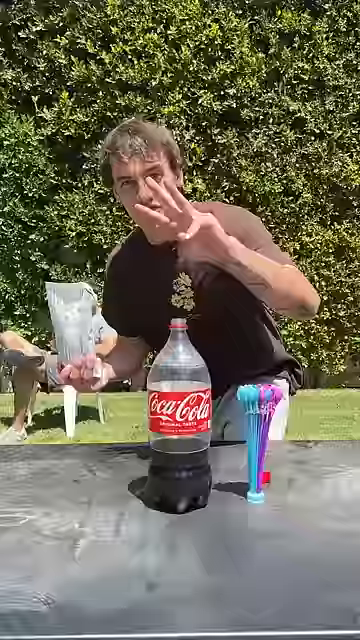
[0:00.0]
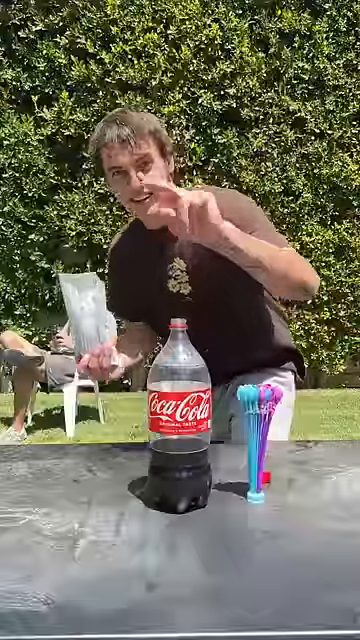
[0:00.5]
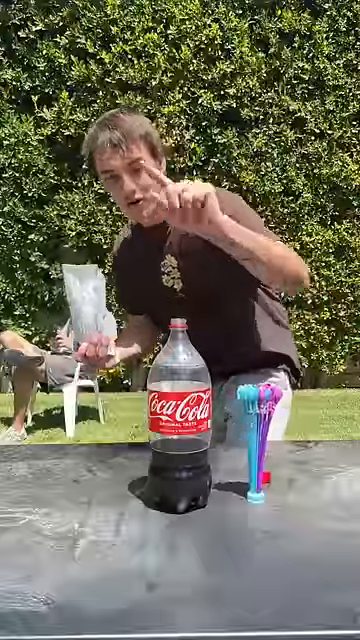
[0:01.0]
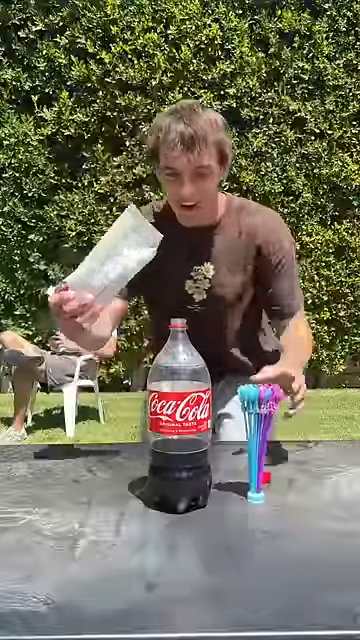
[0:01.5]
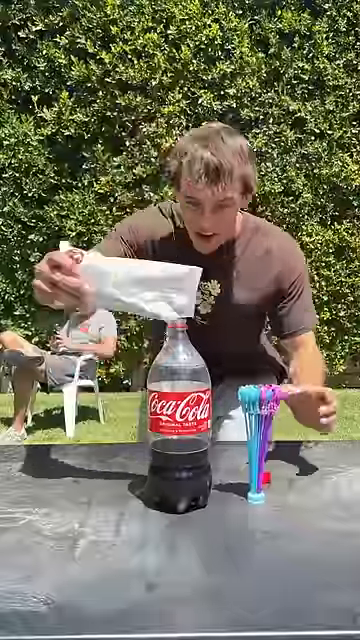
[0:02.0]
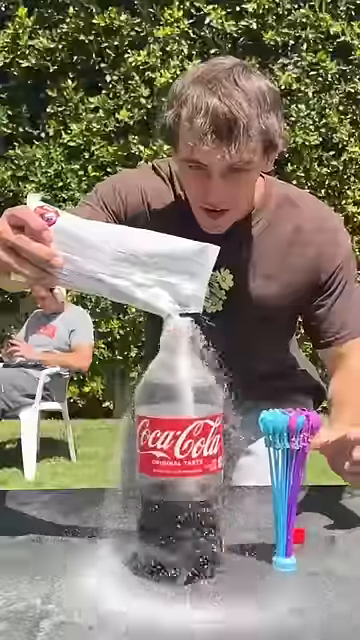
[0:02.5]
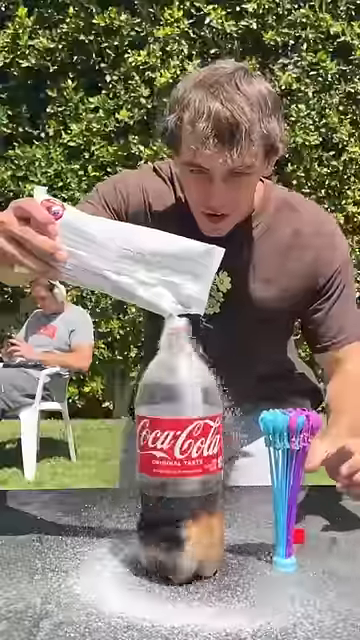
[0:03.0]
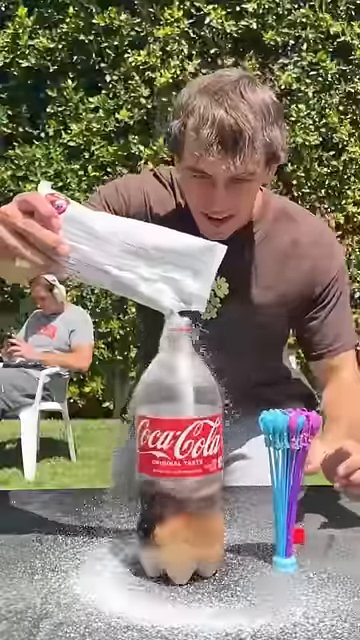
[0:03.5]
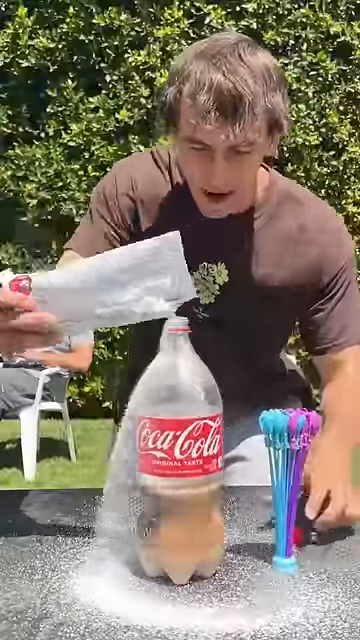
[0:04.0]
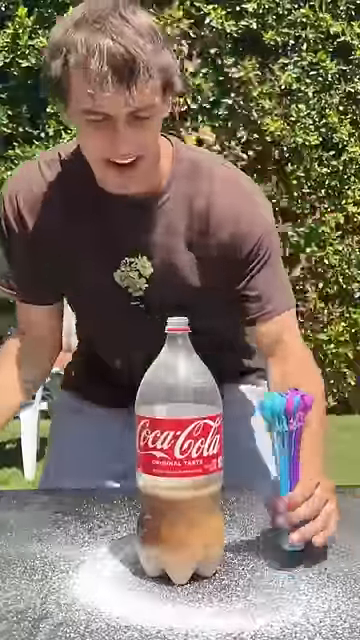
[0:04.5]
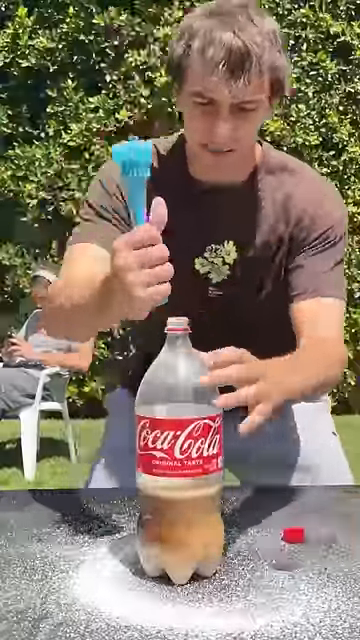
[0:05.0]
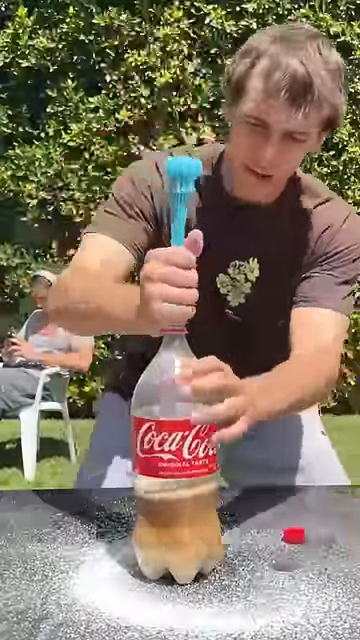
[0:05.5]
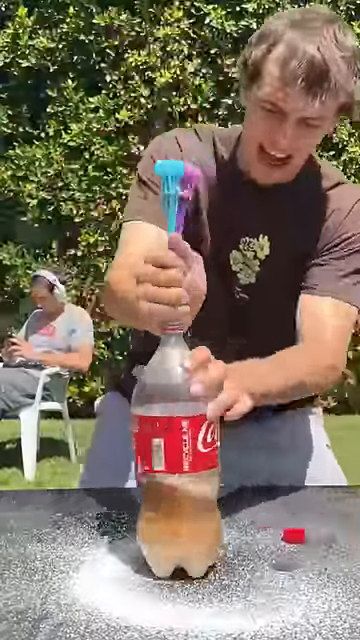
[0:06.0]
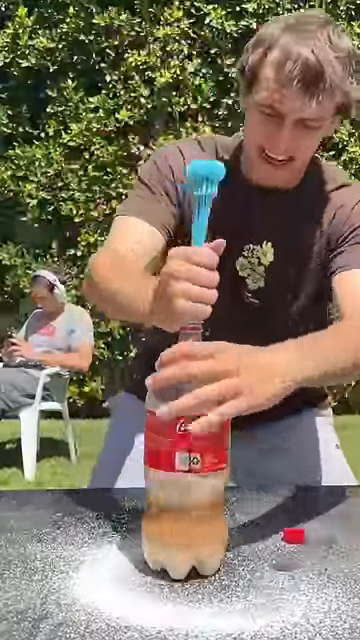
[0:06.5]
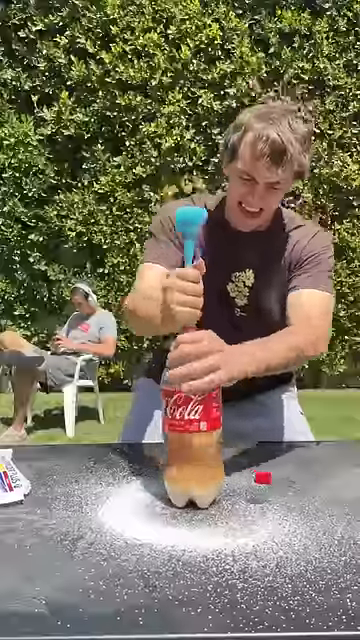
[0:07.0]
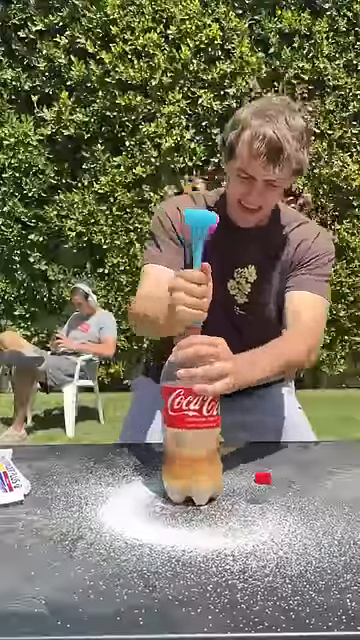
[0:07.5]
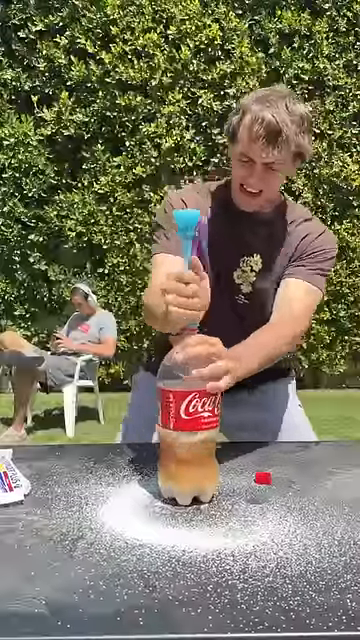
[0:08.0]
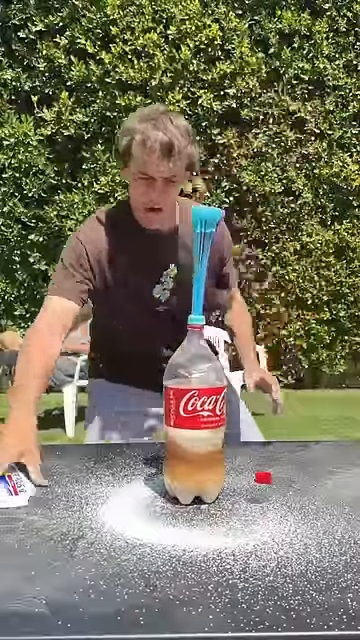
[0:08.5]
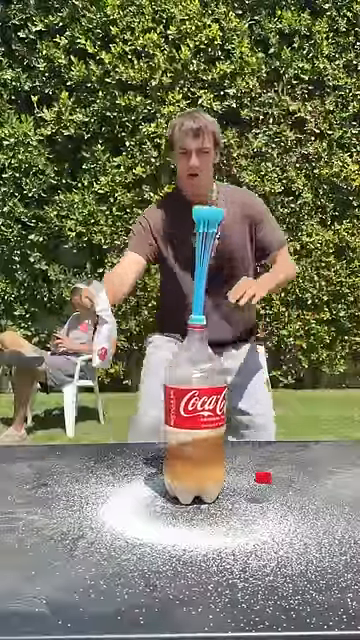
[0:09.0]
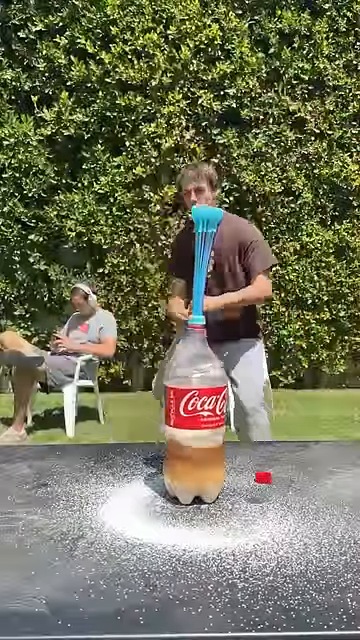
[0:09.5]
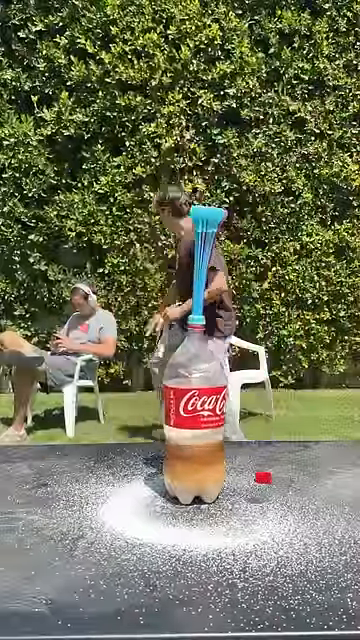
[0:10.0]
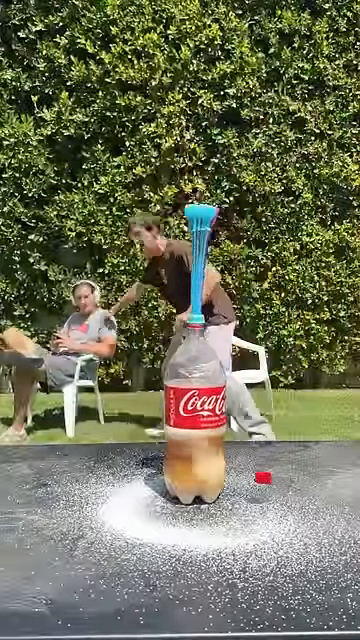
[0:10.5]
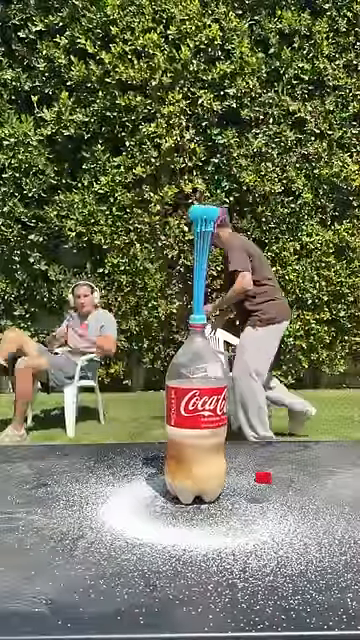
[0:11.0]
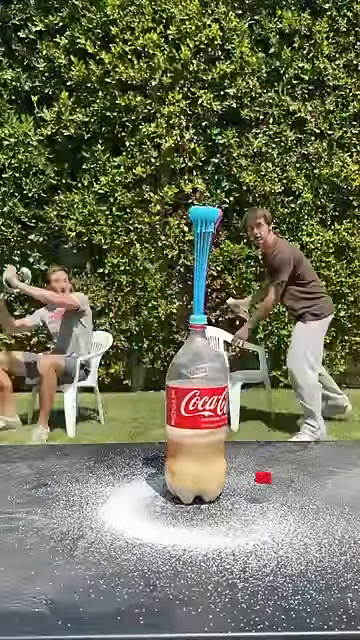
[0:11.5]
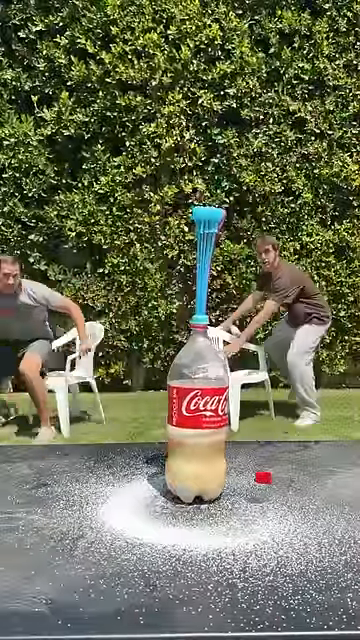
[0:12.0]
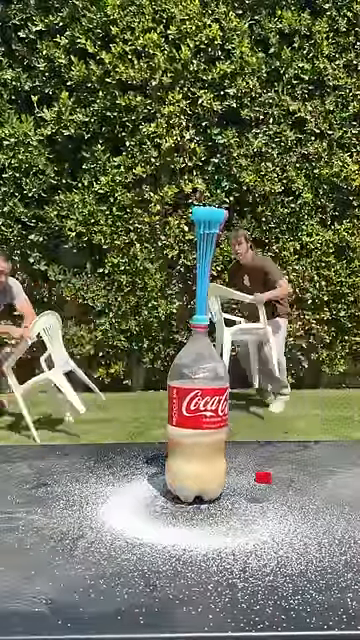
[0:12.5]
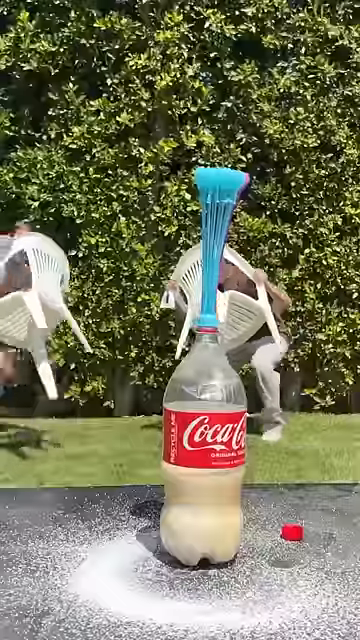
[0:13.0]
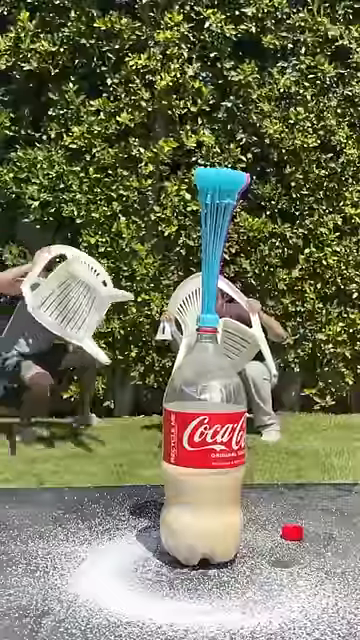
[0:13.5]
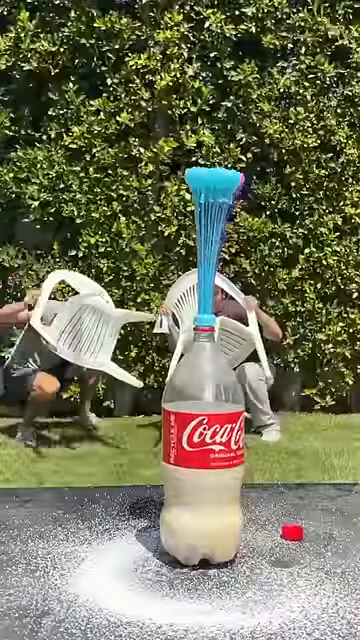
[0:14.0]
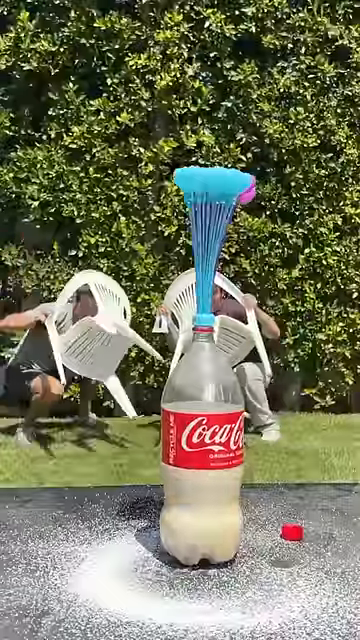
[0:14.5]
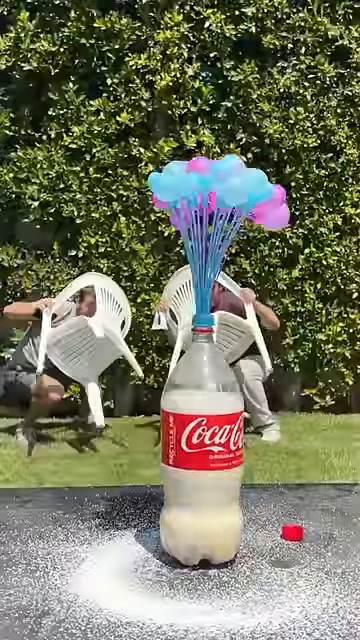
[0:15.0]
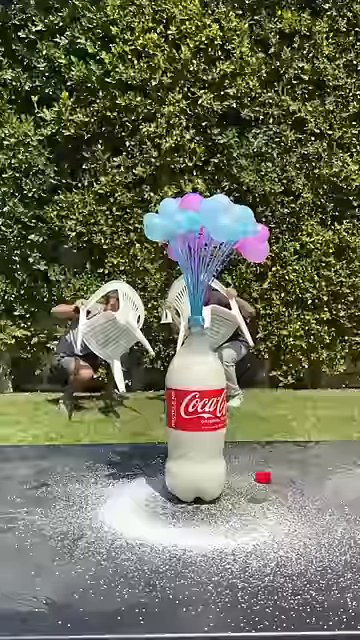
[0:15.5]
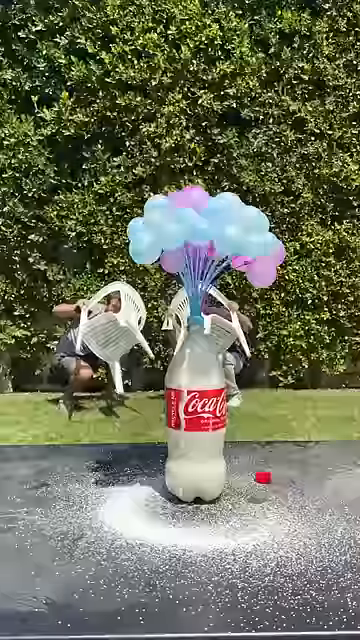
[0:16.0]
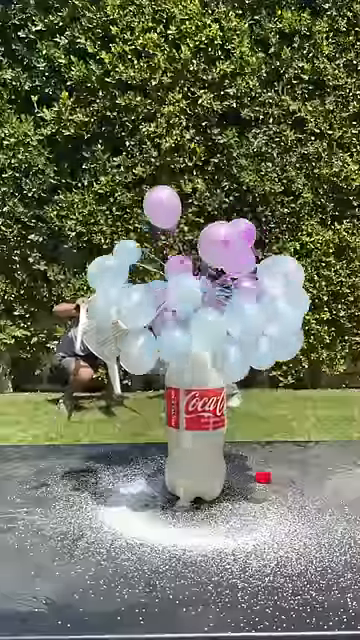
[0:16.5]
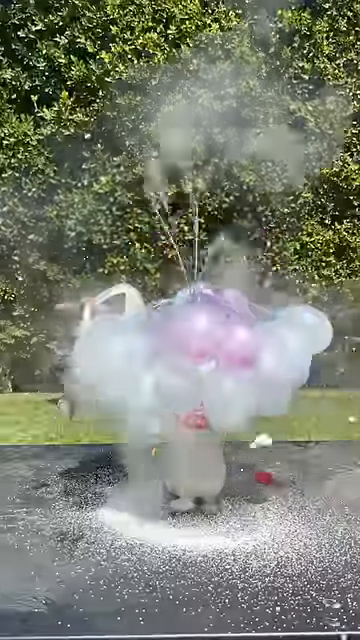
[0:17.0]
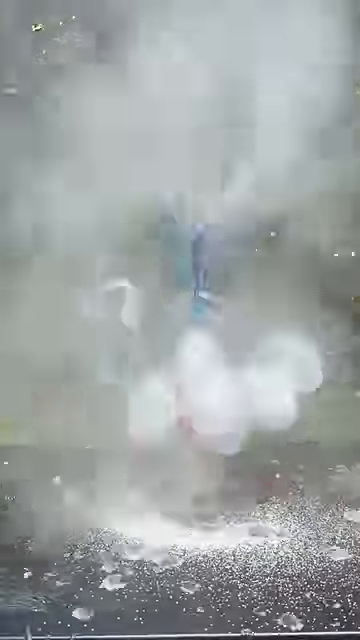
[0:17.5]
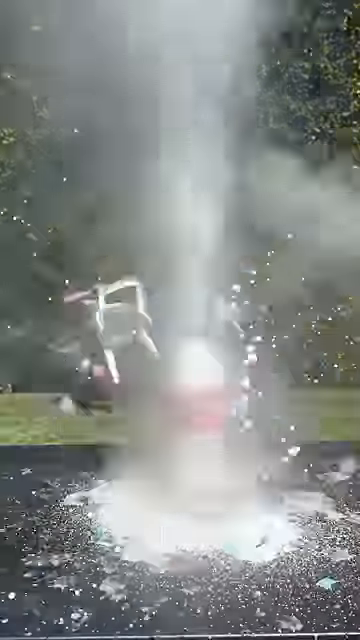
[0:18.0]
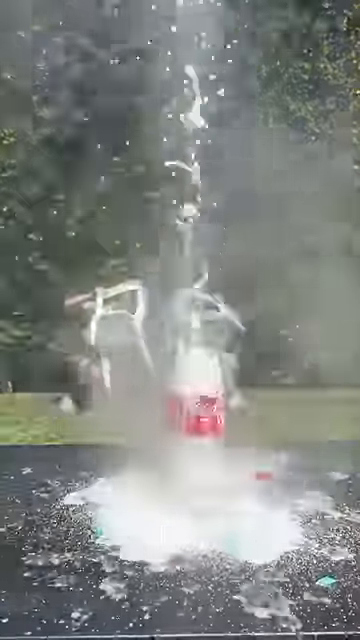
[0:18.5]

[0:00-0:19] The video opens with a glimpse of a man placing a blue object into the mouth of a clear plastic Coca Cola bottle. The man is outdoors and is counting with his fingers. In front of him is a grey surface with a bottle of Coca Cola only one third filled with Coke, and beside the bottle is a blue and pink object. The man is standing with his back towards a large bush of green plants and wears a brown t-shirt. It is quite sunny, and shadows are cast on his t-shirt. He pours a white powdery substance into the bottle of Coca Cola, then puts what looks like a blue funnel into the bottle; this is the item first seen on the grey surface. The man backs off and touches the shoulder of a woman sitting behind him, tapping her to get her reaction to what he is doing. She wears white headphones and is sitting on a white plastic chair with her legs crossed at the knee. The bottle begins to quiver, and the man and the woman duck behind their white plastic chairs as if waiting for some sort of explosion. The bottle fills up with a white, foamy-looking substance, and the pink and white object inserted into the bottle begins to inflate like little balloons from the chemical reaction taking place in the Coca-Cola bottle. They inflate and then explode because of the chemical reaction inside the bottle.